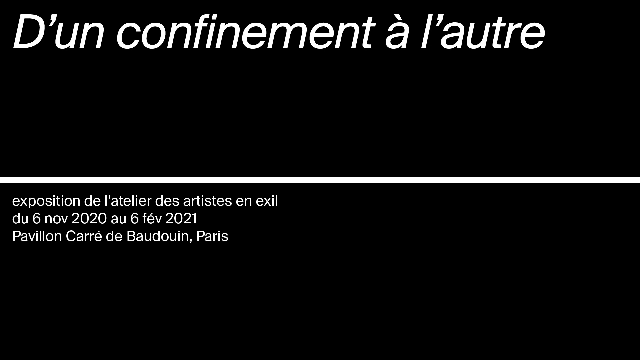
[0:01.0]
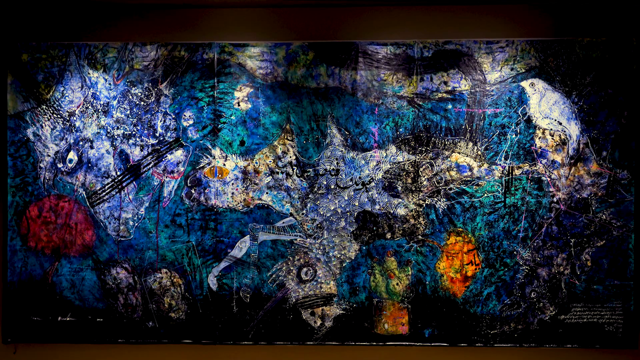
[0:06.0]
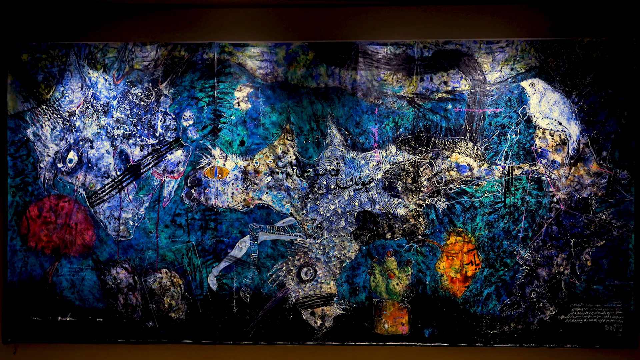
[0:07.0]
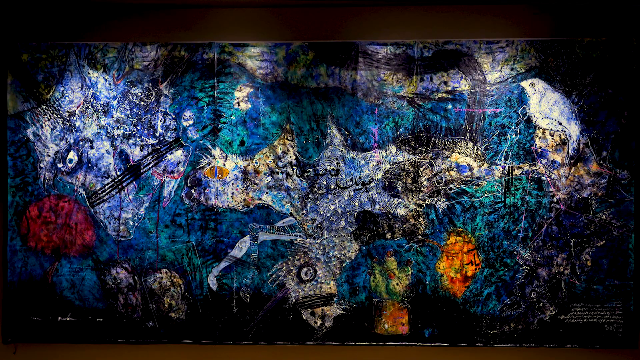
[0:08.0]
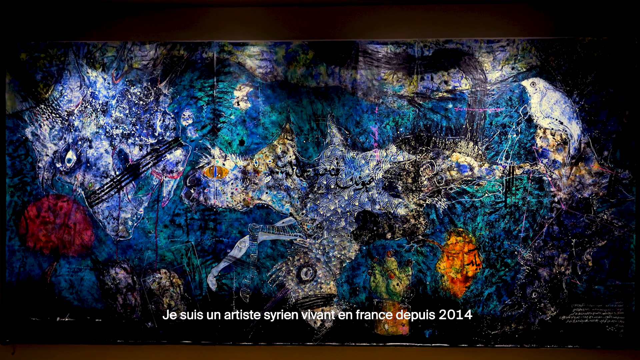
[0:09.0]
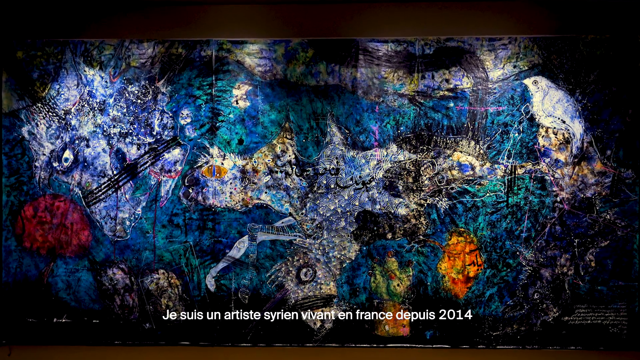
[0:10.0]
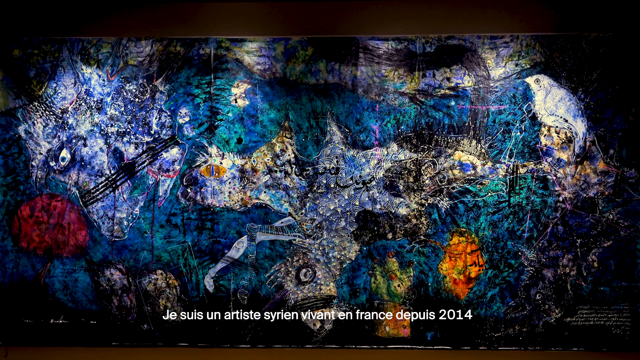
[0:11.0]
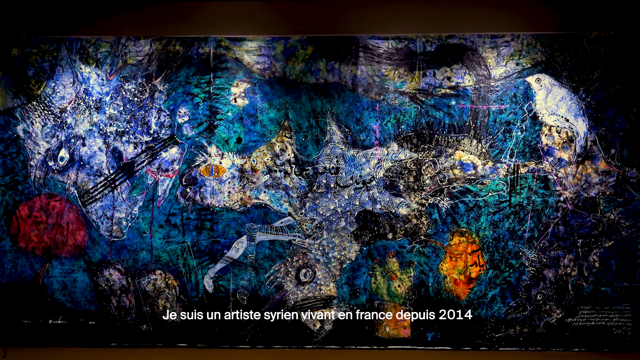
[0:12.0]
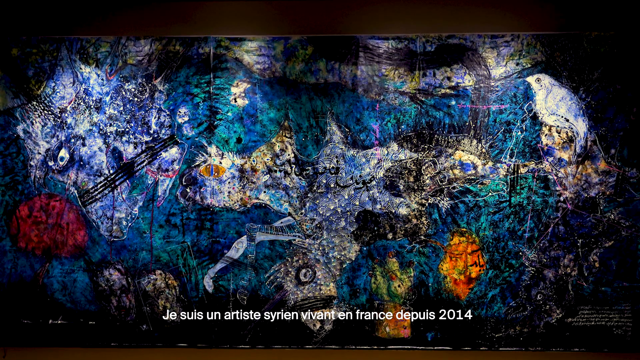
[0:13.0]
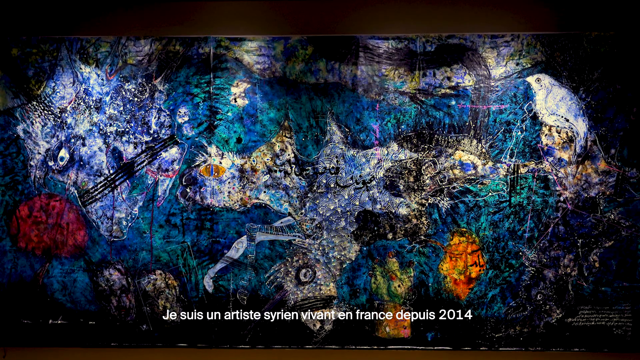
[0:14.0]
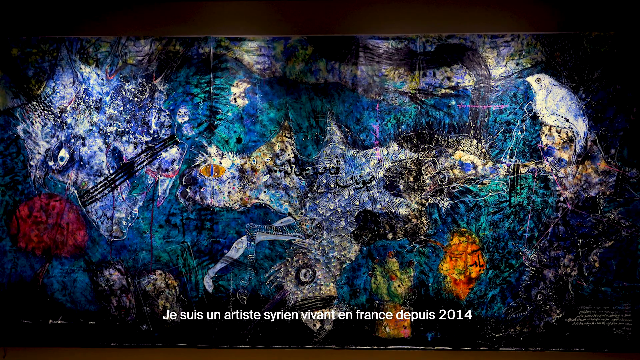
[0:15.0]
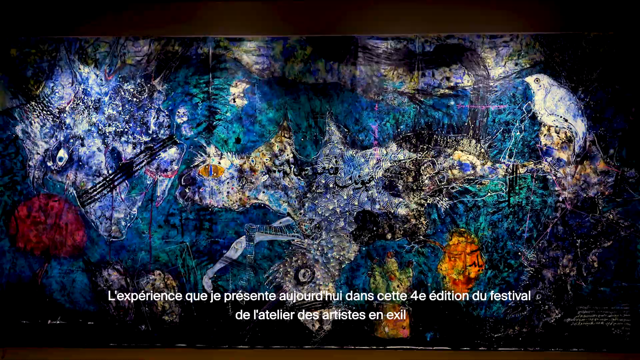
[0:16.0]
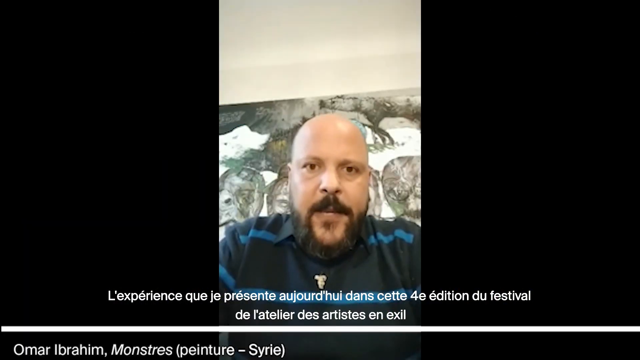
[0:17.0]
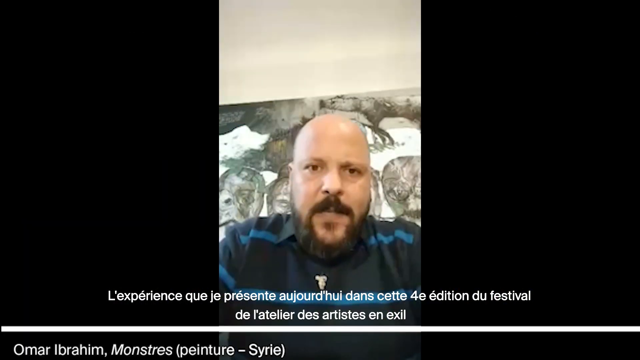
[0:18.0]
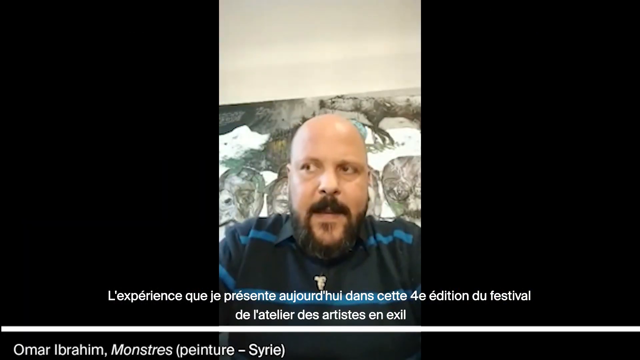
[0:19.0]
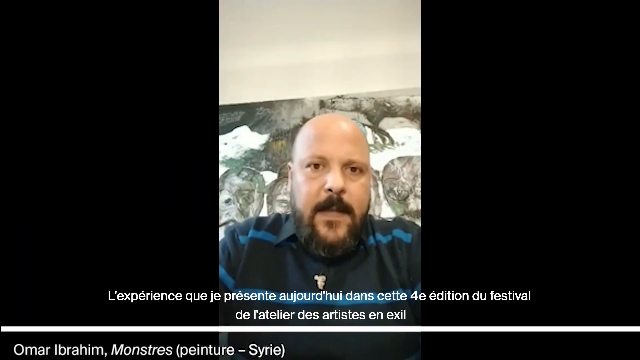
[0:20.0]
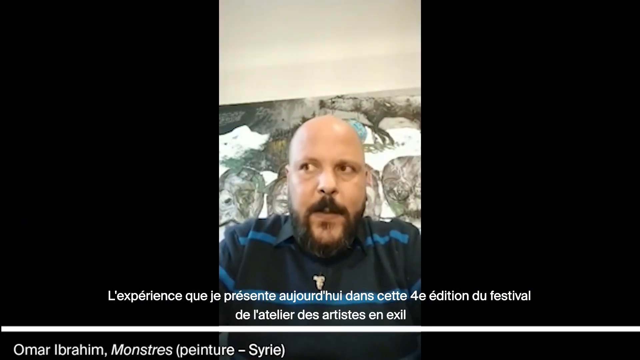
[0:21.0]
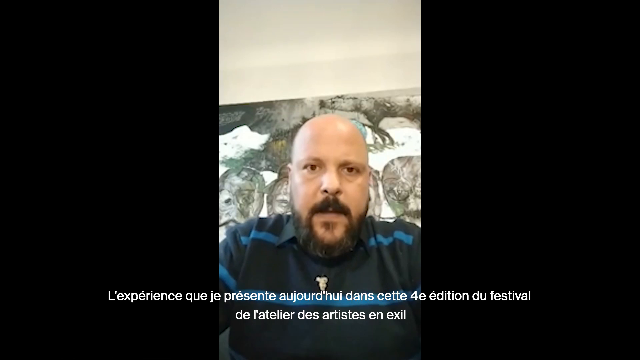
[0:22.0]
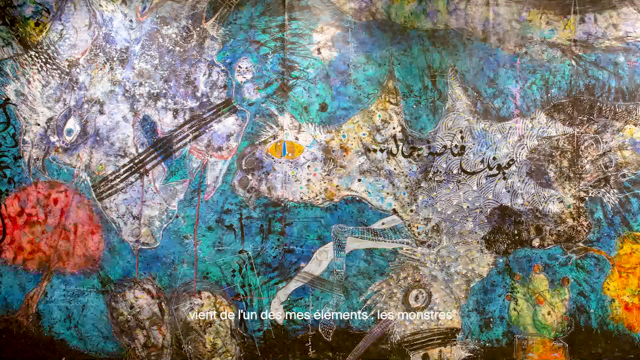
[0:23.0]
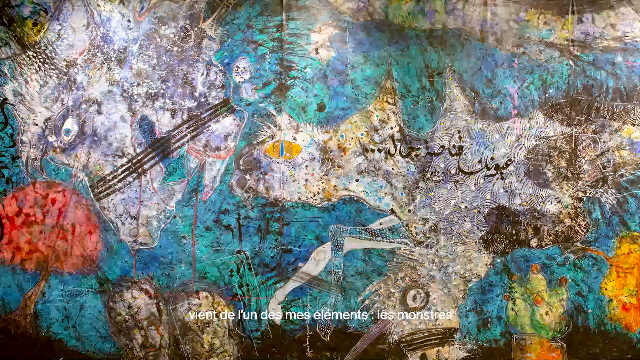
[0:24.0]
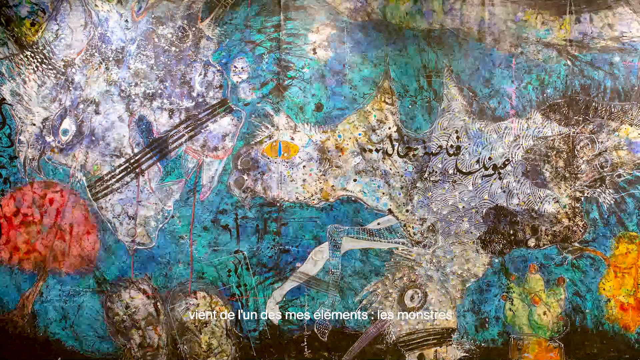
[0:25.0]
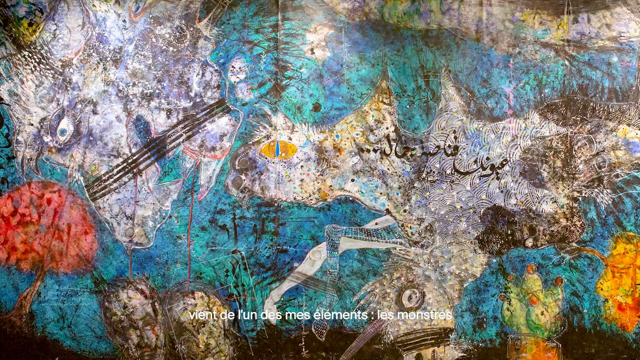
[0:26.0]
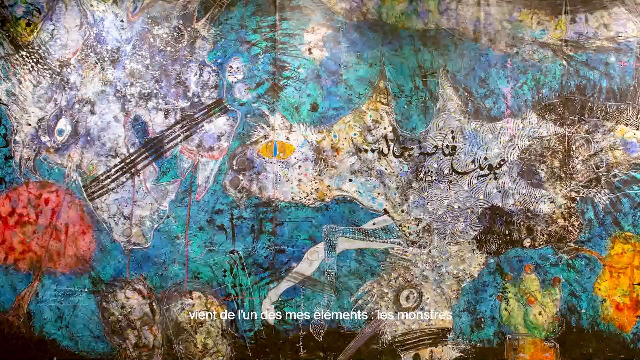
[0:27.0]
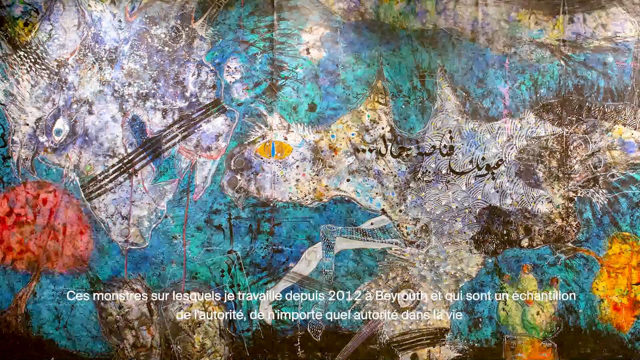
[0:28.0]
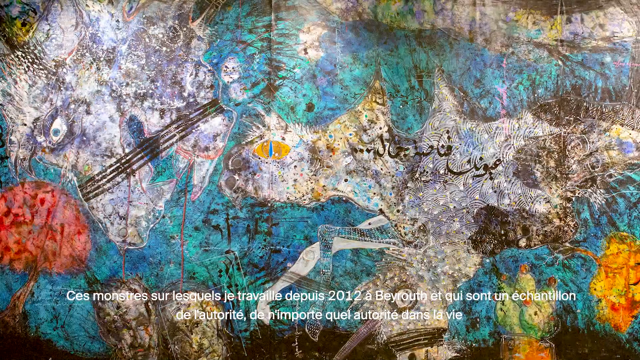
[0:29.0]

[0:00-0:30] The video opens on a black screen with white text in a different language. The dates "6th of November 2020" and "February 6 2021" appear, and the opening credit indicates that it takes place in Paris. It then opens to a painting filled with many different colors and depicted images. The camera pans to show the whole painting and slowly starts zooming in. It then transitions to a man who appears to be on his phone, giving some sort of interview and talking to the screen, possibly about the painting. It flips back to the painting, showing different animals and visible brushstrokes. The video keeps switching between the man and the painting, and the painting seems to be its main focus.